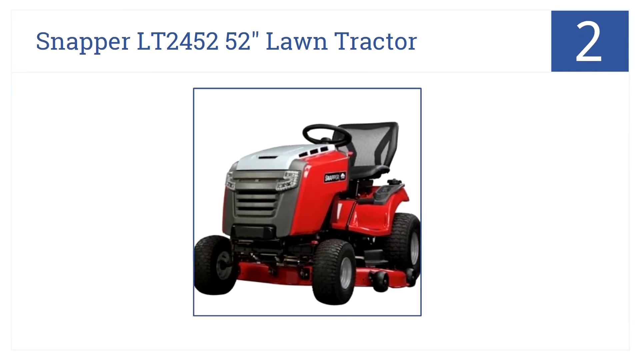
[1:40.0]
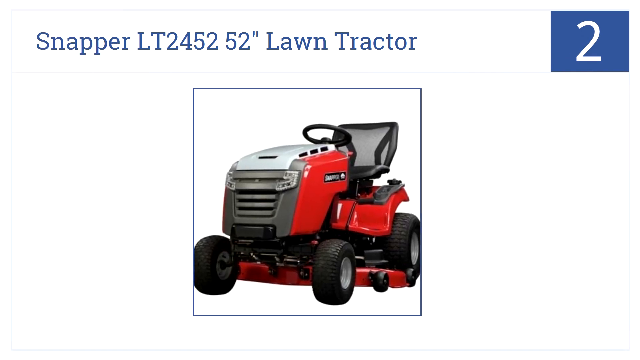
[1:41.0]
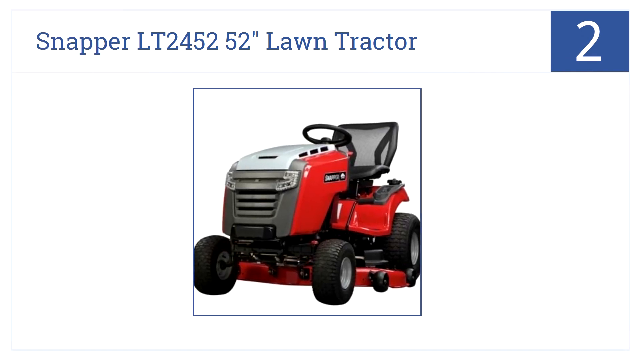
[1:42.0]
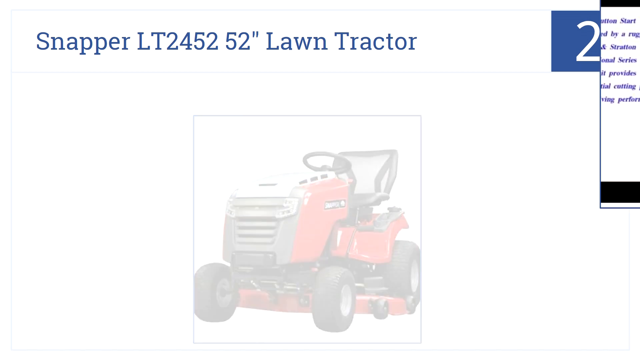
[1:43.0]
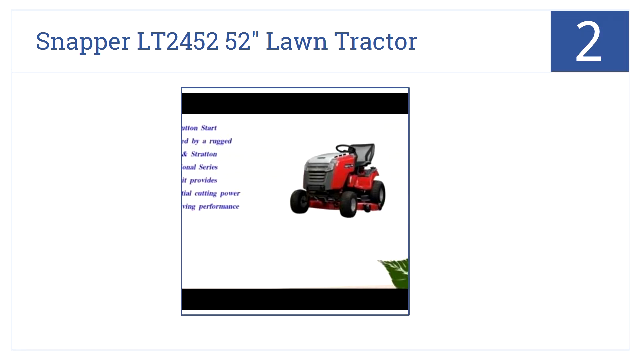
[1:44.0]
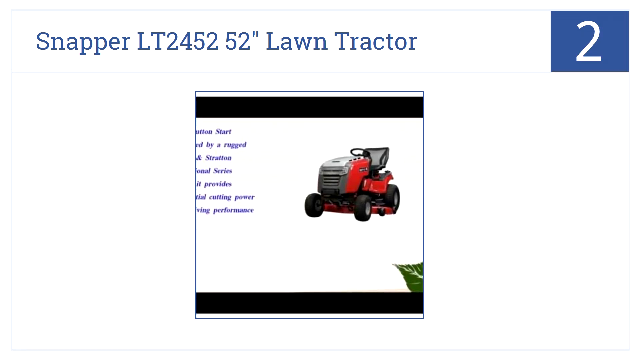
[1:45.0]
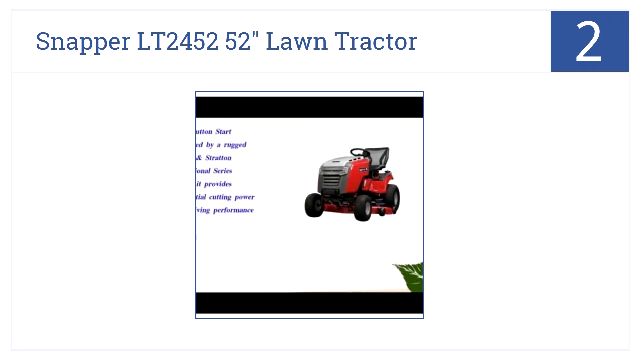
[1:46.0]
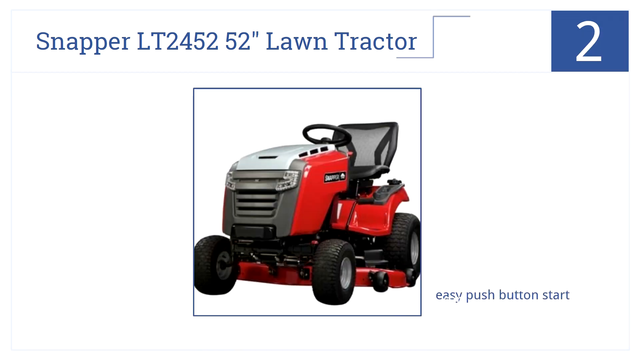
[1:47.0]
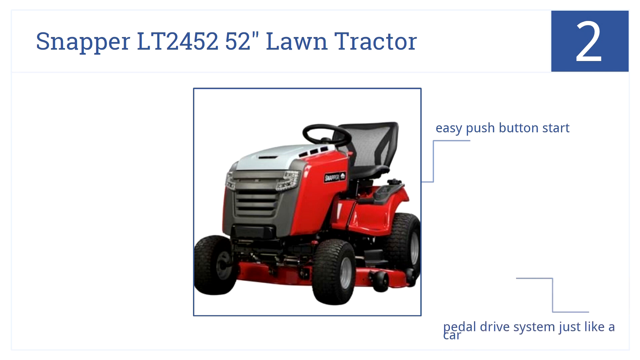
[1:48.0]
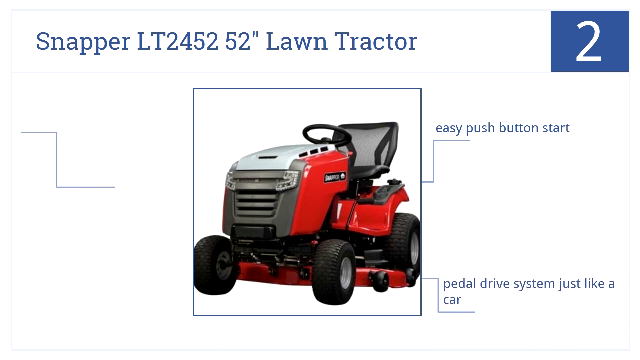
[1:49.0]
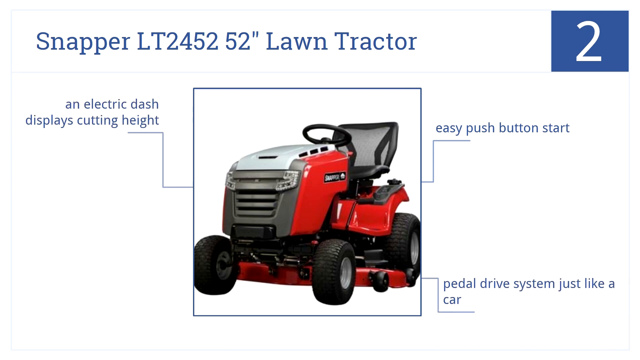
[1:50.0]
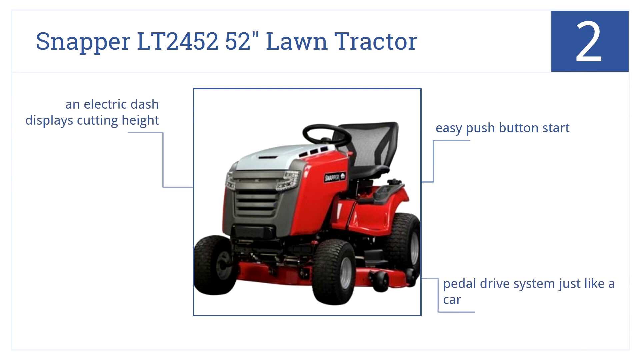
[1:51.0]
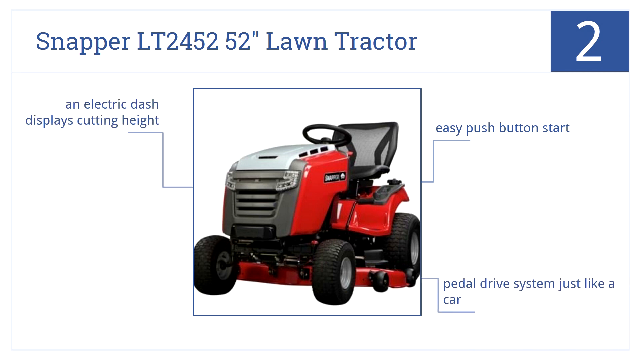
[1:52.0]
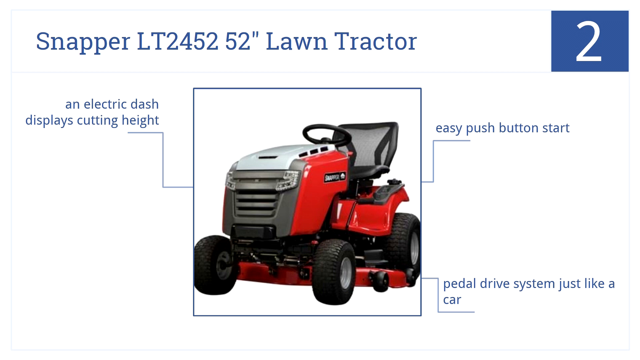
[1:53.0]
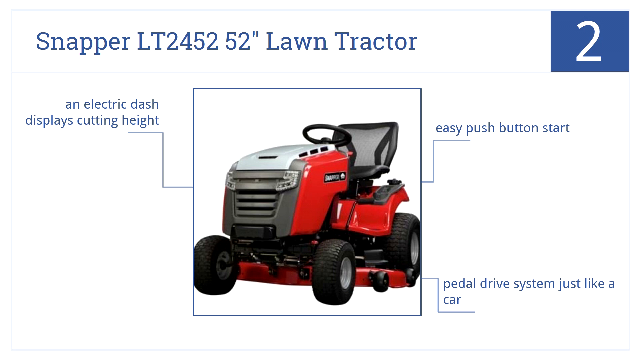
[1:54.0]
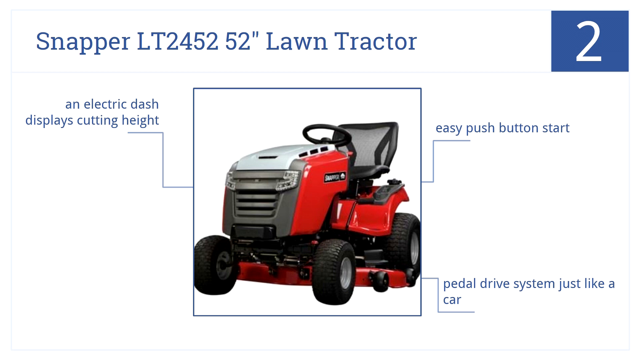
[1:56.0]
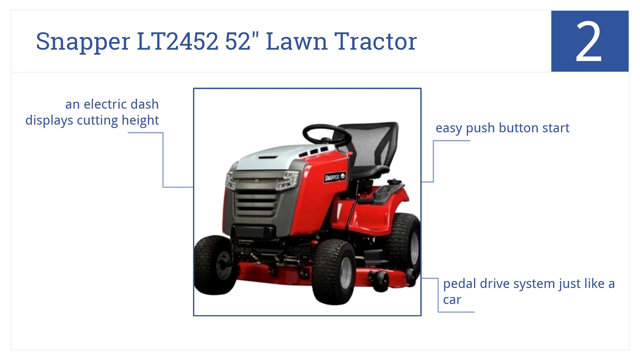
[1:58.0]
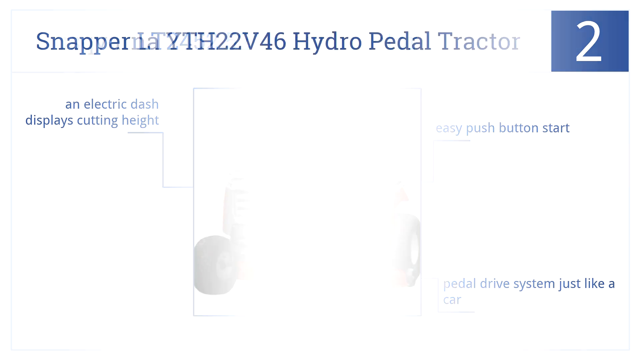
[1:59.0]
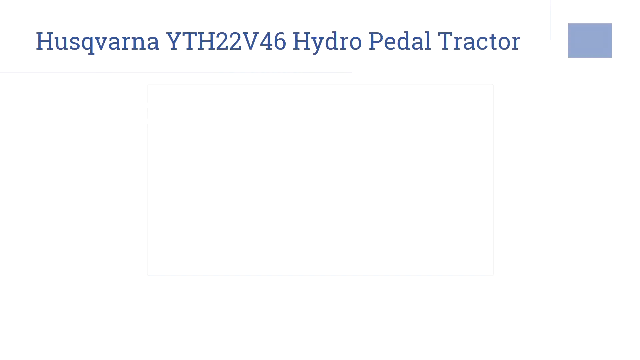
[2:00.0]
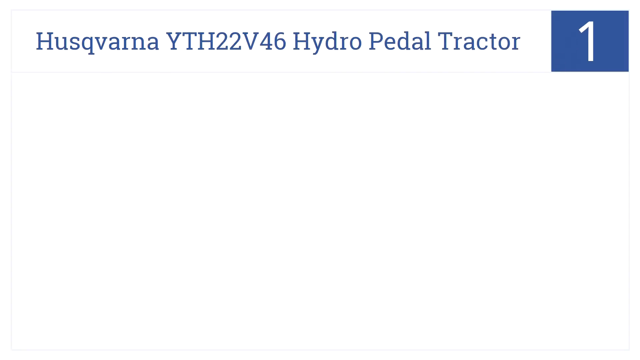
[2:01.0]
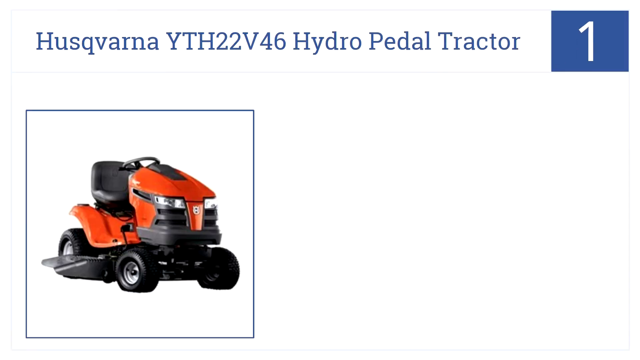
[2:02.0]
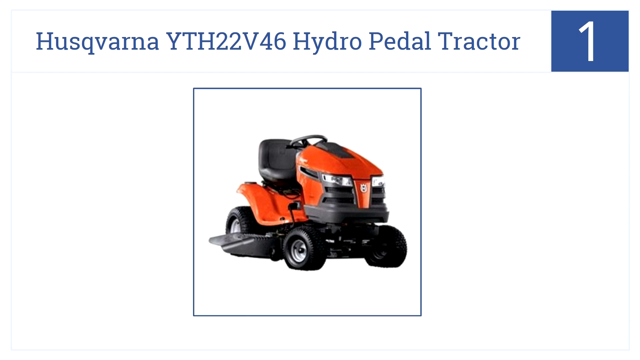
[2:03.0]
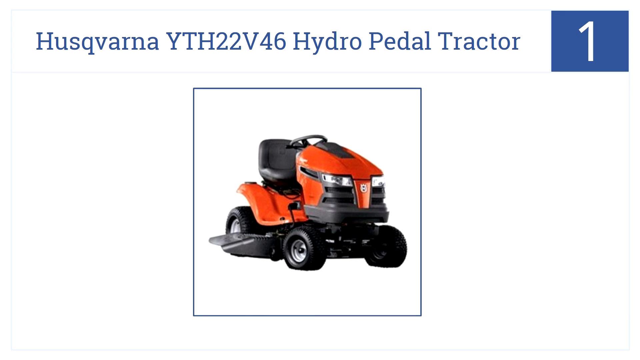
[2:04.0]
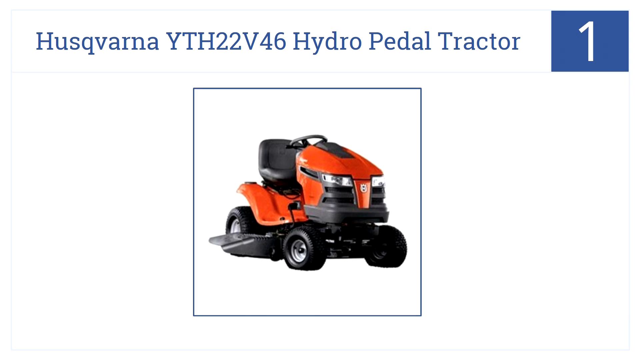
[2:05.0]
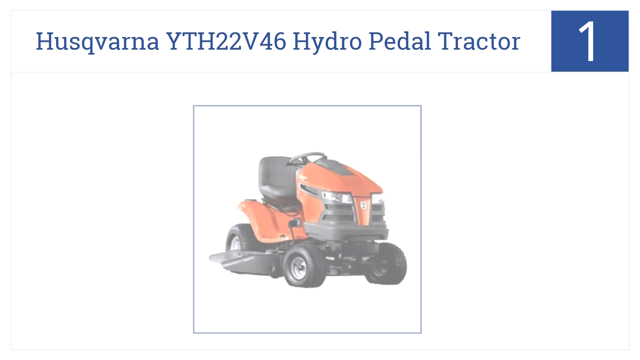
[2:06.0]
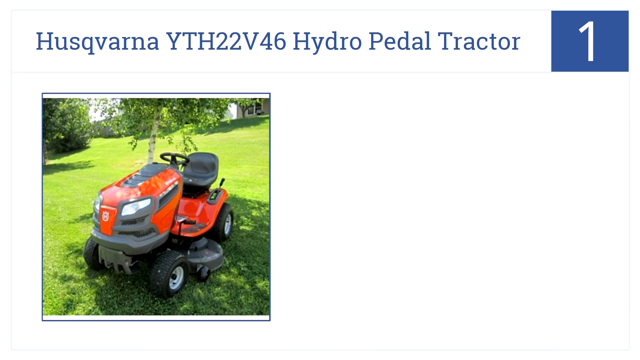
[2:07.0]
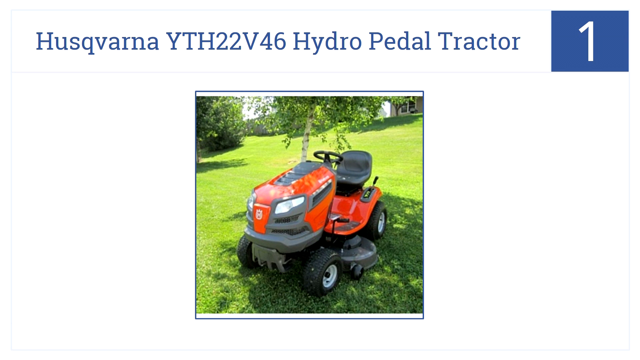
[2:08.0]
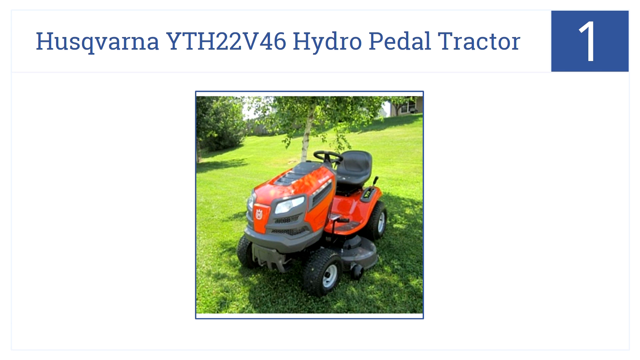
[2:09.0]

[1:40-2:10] The larger red tractor remains, with the blue logo on the top right showing a white number 2 and the blue text at the top reading "Snapper LT" lawn tractor with numbers. A new image shows the same tractor from further away against a black background, with information on the side. It quickly transitions back to the original image, and new blue text appears around the tractor reading "an electric dash displays cutting height," "an easy push button start," and "a pedal drive system just like a car," with arrows pointing toward the tractor. The tractor and all the information quickly fade away, and new blue text appears on the top left reading "Husqvarna VTH" with numbers and various letters falling behind it, followed by the words "Hydro Pedal Tractor." The logo on the top right becomes a white 1 on a blue background. An image of a red-orange tractor with strong lights appears, then quickly fades to an image of the same tractor on someone's lawn, and then fades back to the first image.